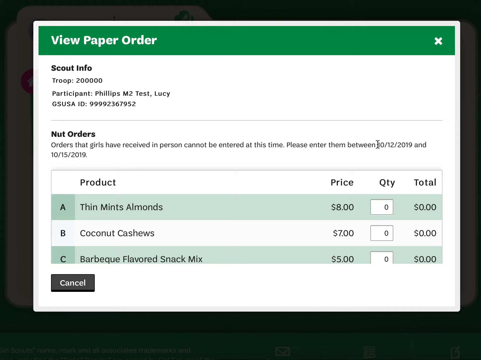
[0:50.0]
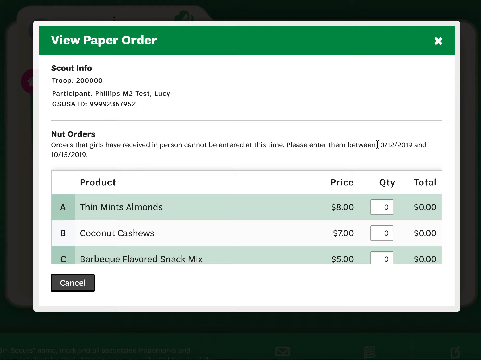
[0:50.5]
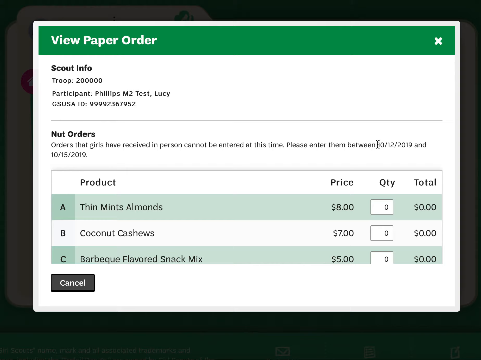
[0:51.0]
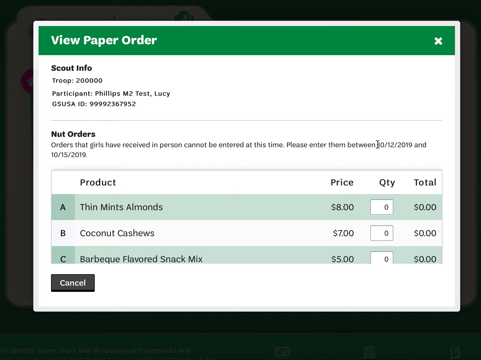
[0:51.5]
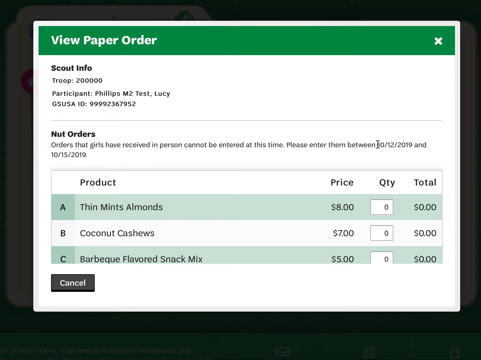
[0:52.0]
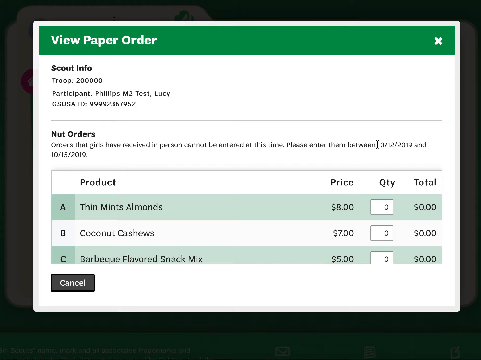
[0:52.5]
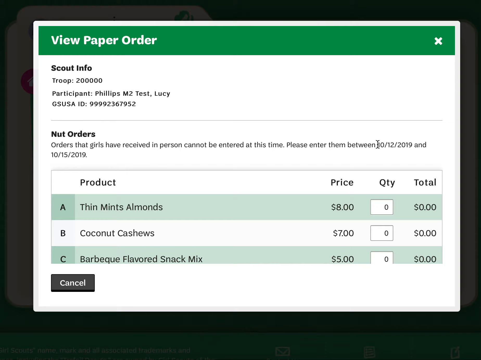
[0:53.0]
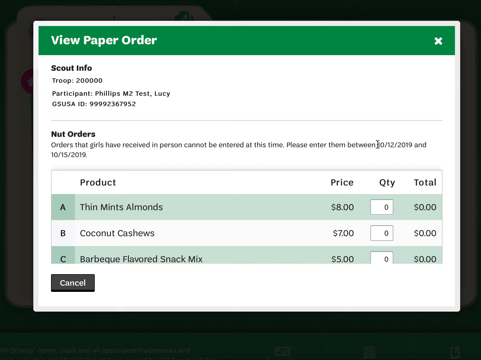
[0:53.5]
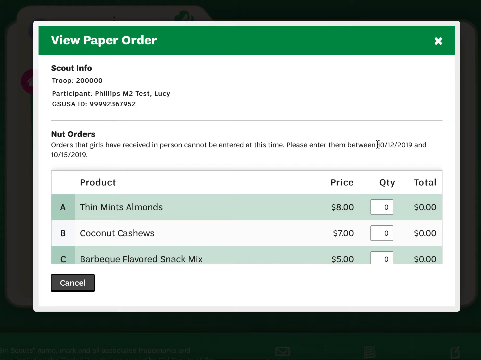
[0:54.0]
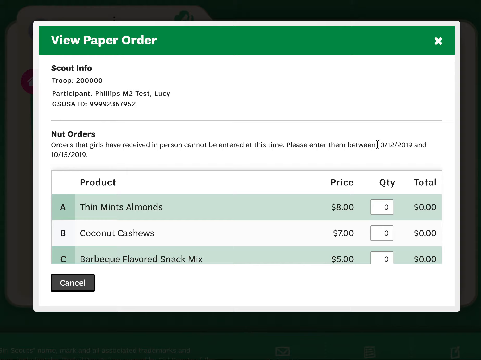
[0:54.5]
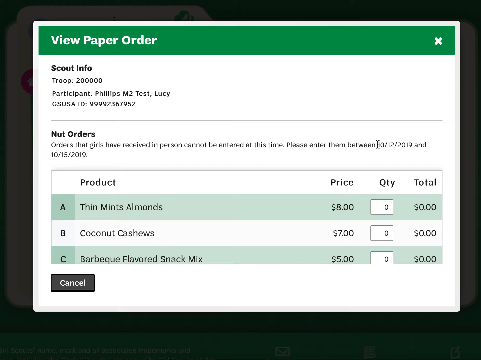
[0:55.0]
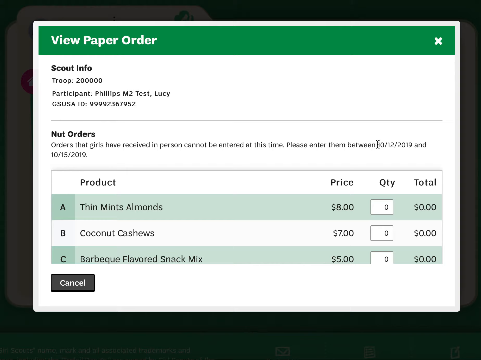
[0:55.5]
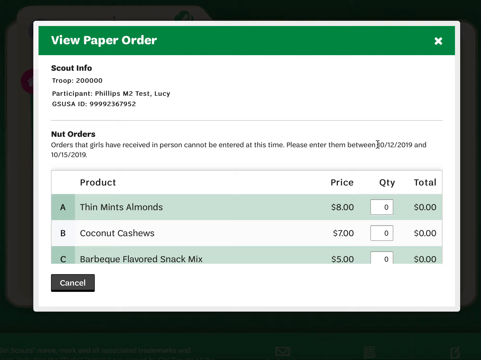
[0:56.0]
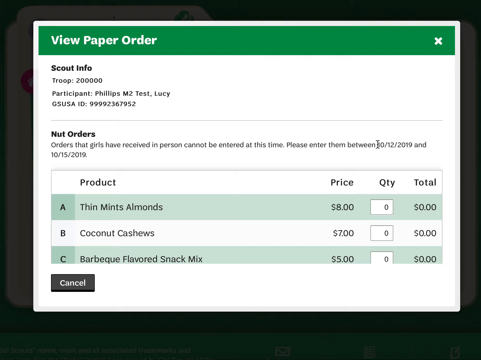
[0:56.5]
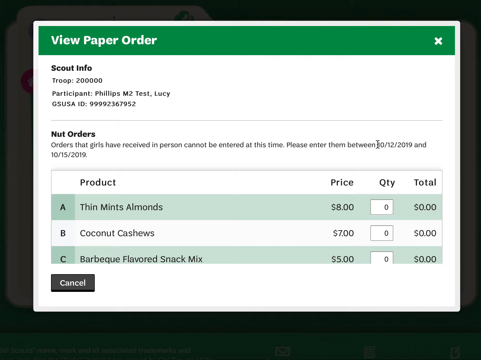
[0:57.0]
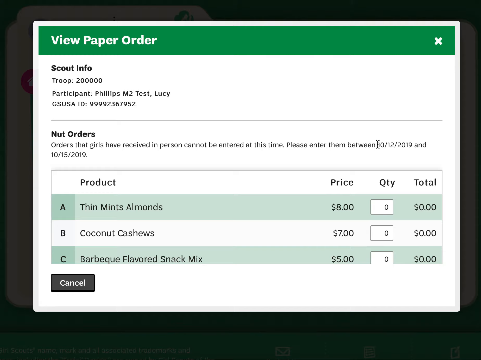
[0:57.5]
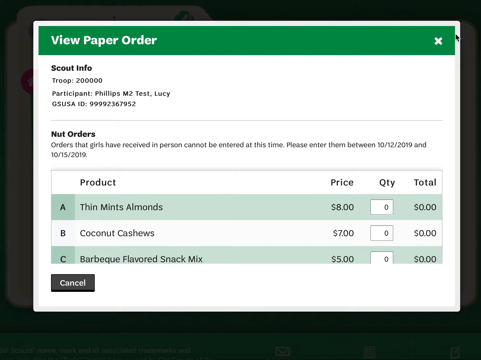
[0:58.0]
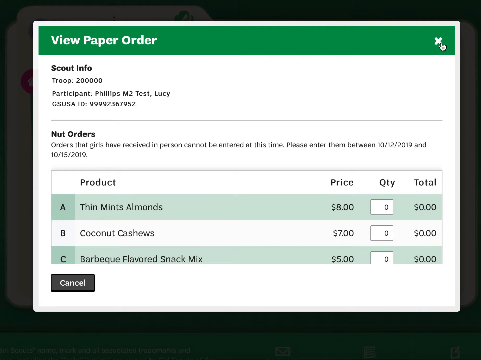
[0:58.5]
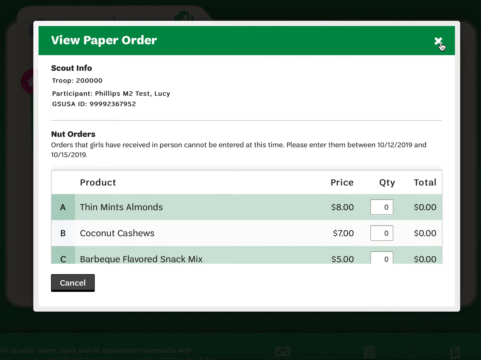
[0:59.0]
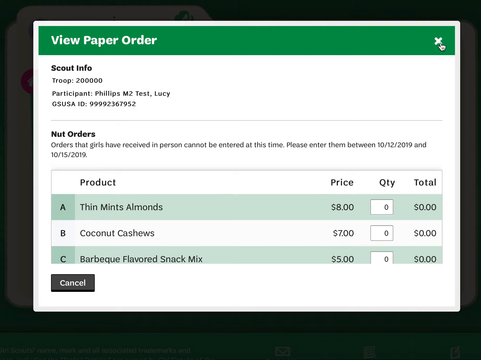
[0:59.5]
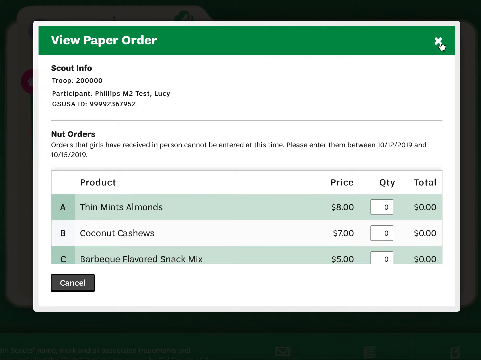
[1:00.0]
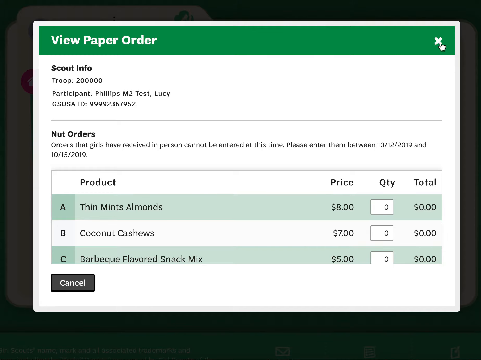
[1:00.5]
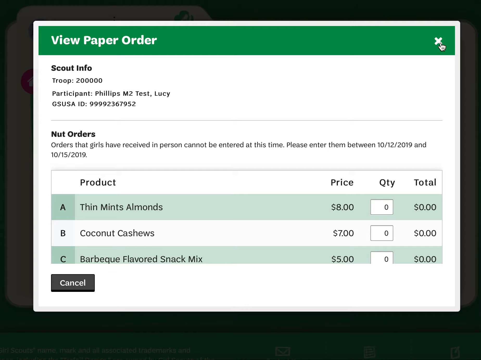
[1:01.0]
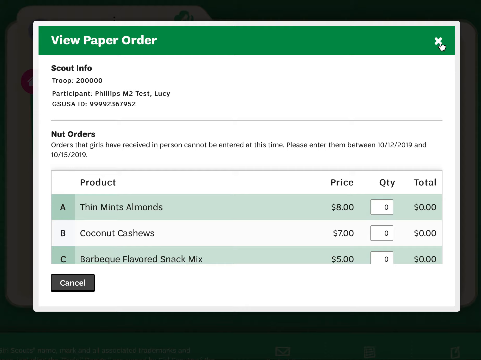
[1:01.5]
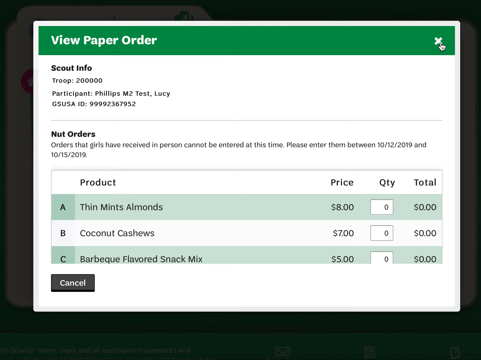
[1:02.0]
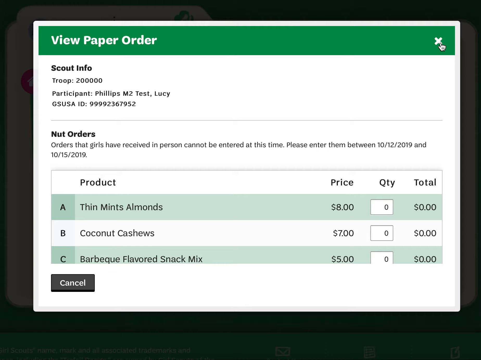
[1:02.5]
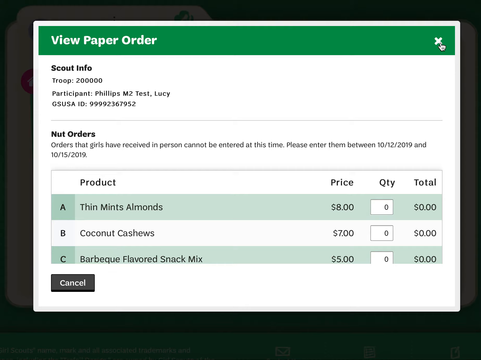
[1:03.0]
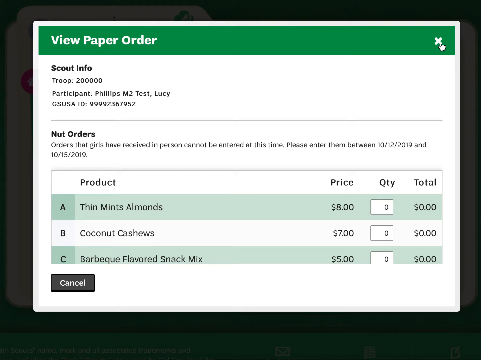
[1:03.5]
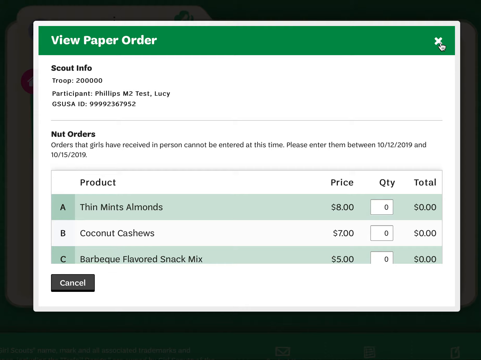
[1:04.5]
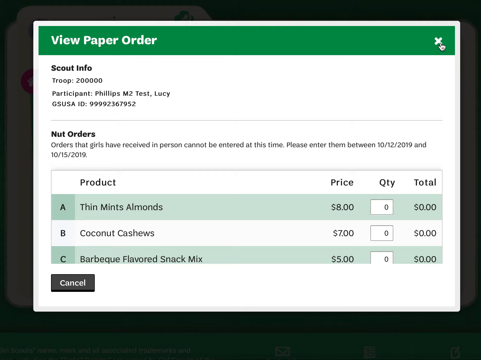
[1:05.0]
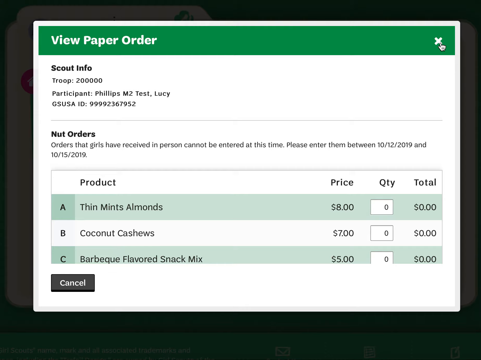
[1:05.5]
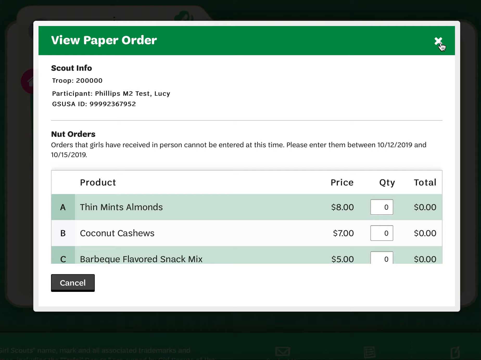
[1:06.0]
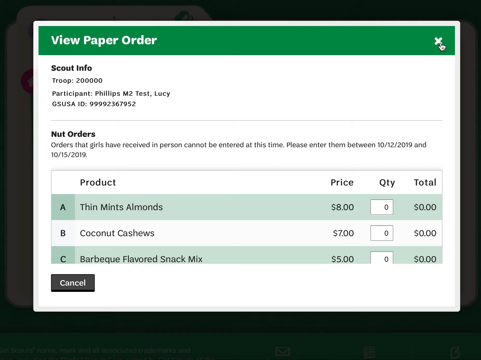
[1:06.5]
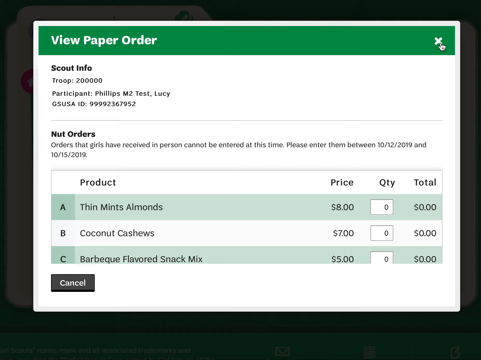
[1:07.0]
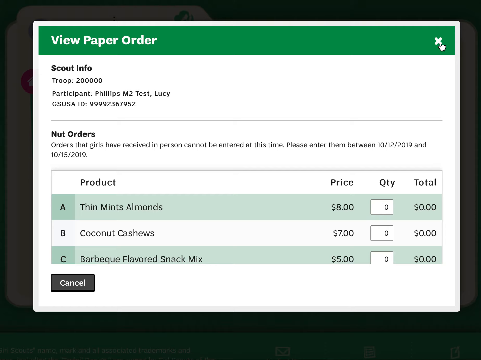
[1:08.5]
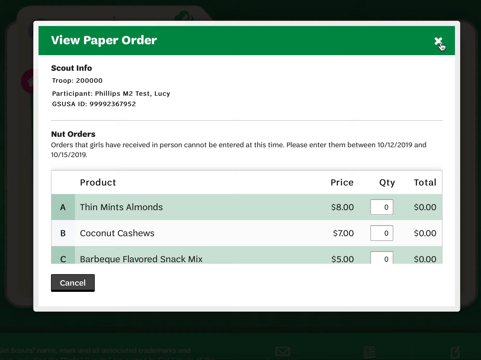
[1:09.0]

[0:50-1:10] The green rectangle with text is at the top and the same graph is in the bottom middle. The mouse moves from the center text toward the top right corner onto the X for closing the page, and hovers over the X for a while. The page shows "view paper order" in the top left in the green rectangle, then "scout info" followed by the scout info. Underneath is another subtitle reading "nut orders" with a small descriptive text, and the table listing the product, price, quantity and total.